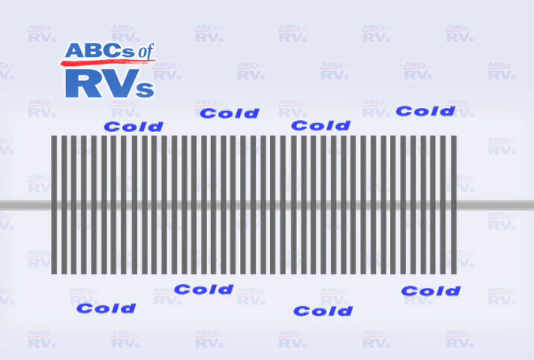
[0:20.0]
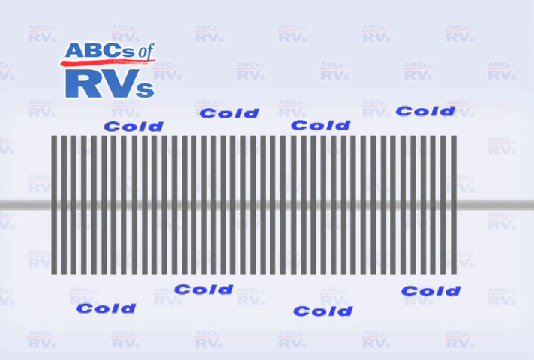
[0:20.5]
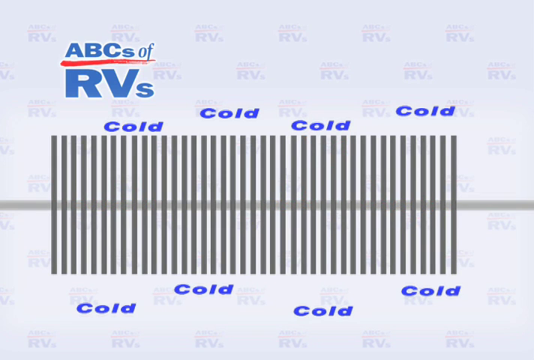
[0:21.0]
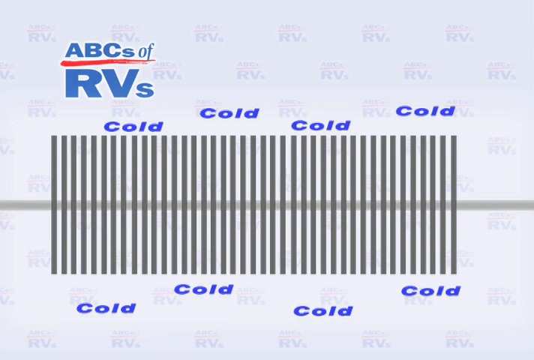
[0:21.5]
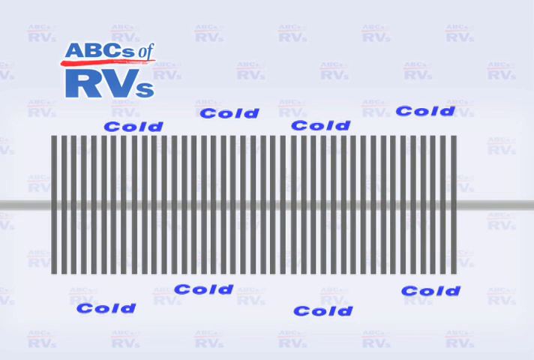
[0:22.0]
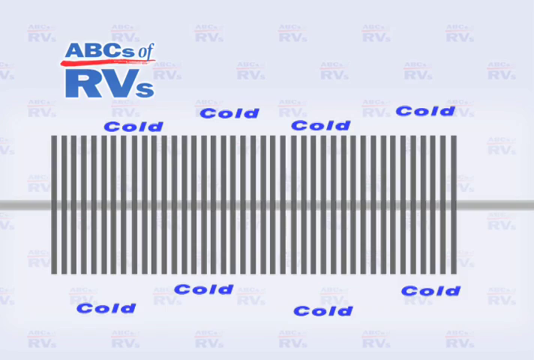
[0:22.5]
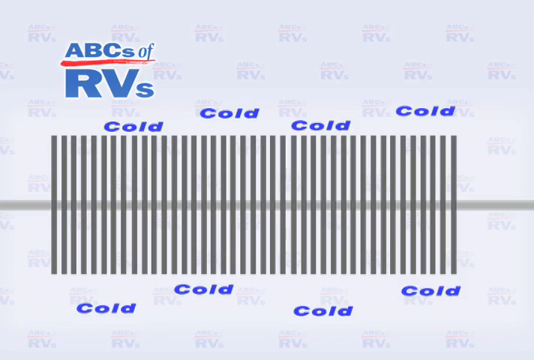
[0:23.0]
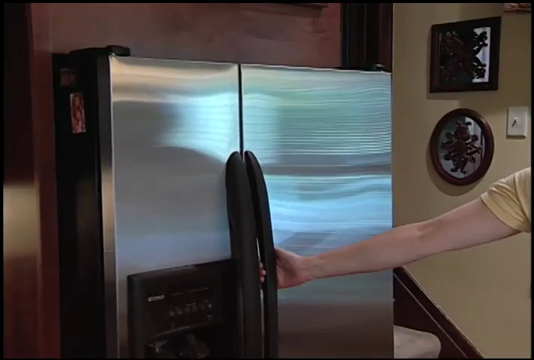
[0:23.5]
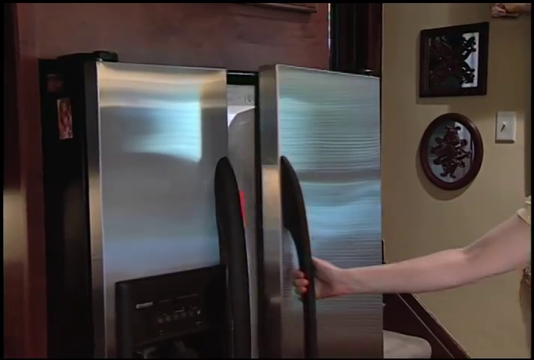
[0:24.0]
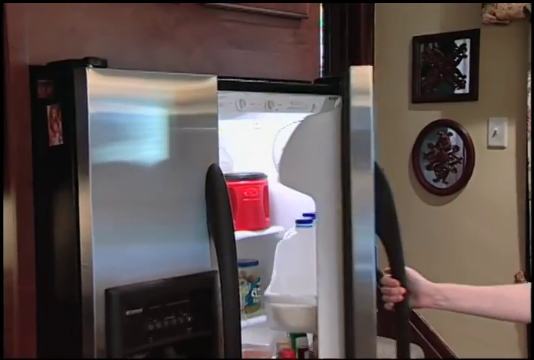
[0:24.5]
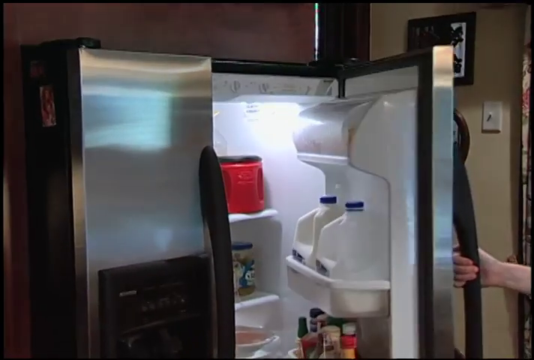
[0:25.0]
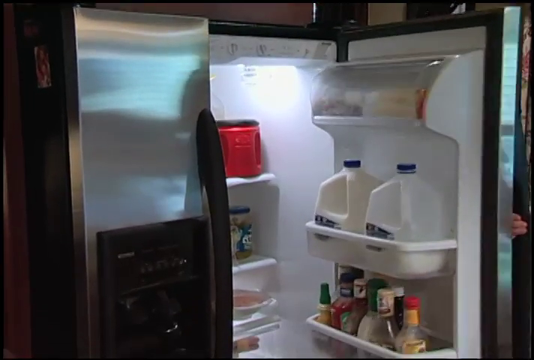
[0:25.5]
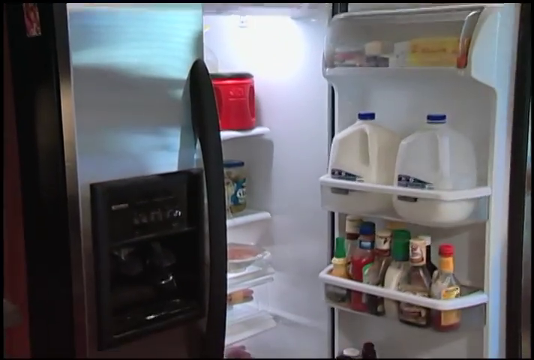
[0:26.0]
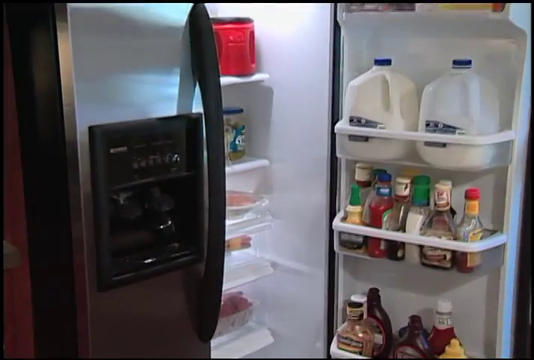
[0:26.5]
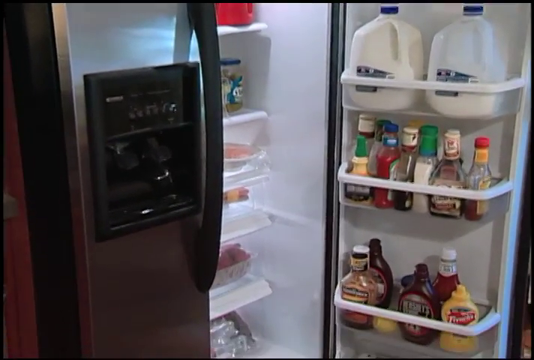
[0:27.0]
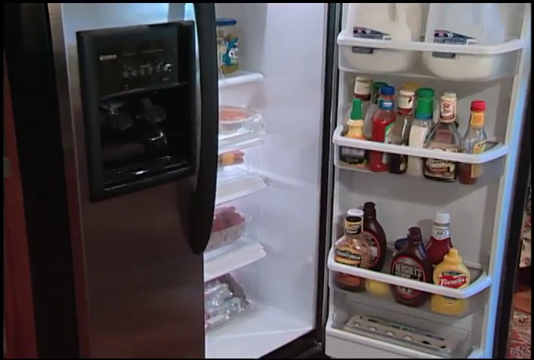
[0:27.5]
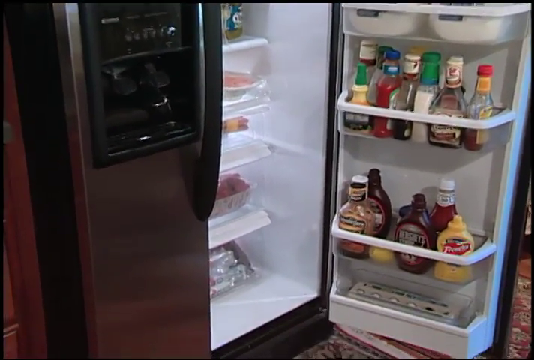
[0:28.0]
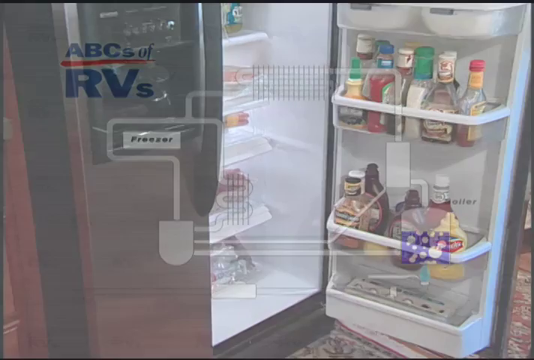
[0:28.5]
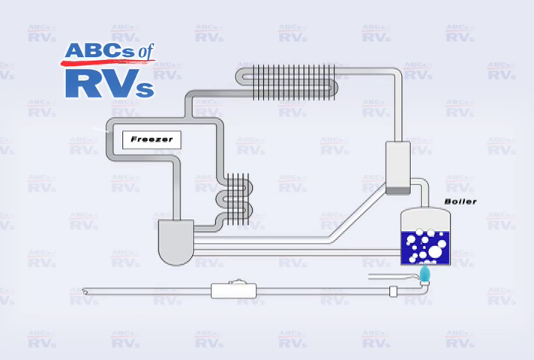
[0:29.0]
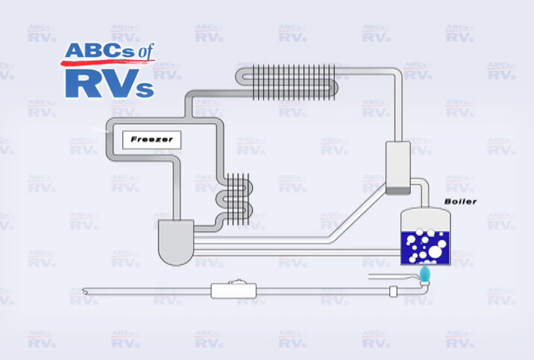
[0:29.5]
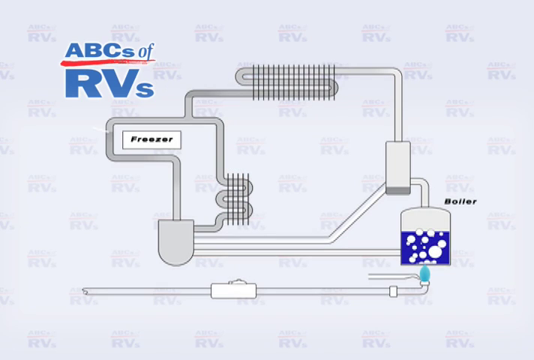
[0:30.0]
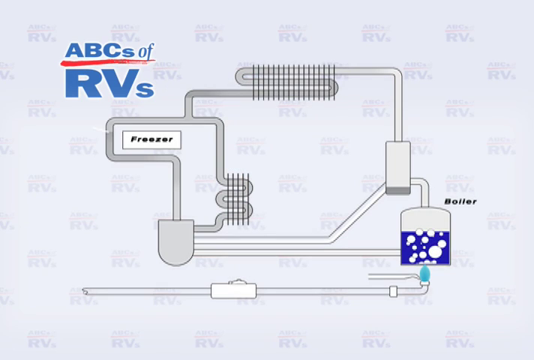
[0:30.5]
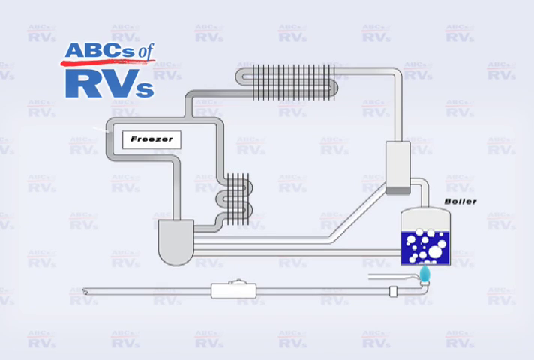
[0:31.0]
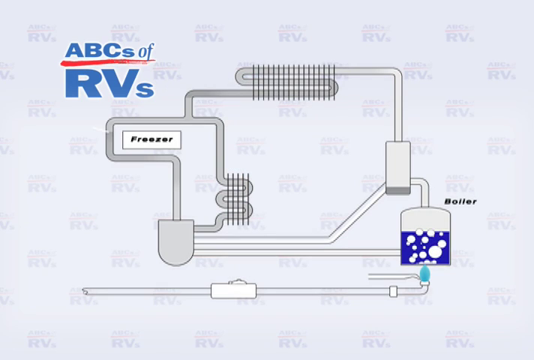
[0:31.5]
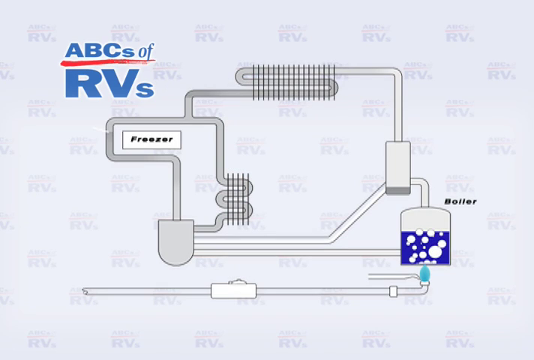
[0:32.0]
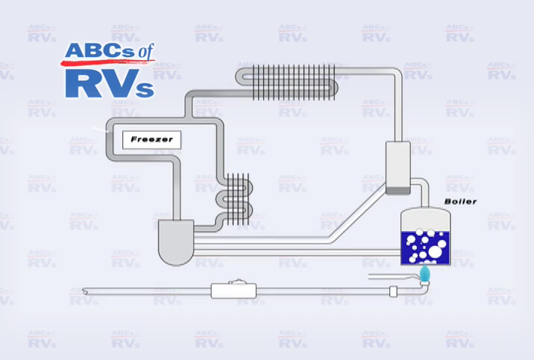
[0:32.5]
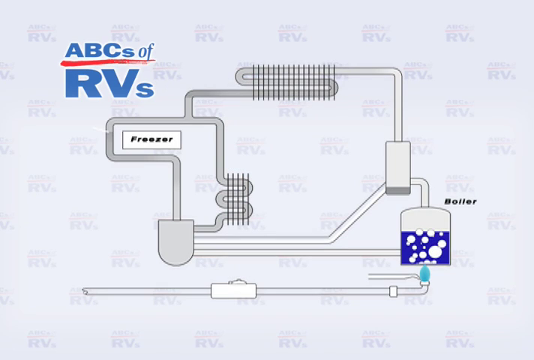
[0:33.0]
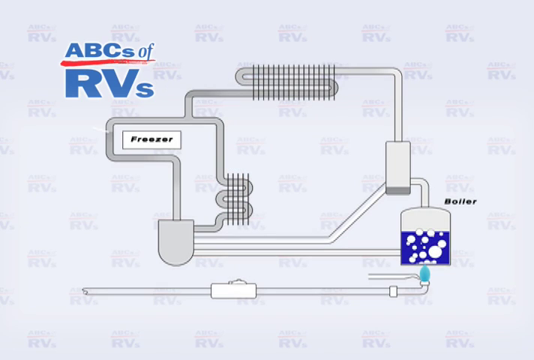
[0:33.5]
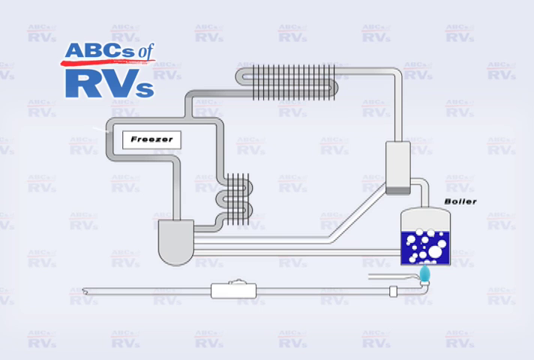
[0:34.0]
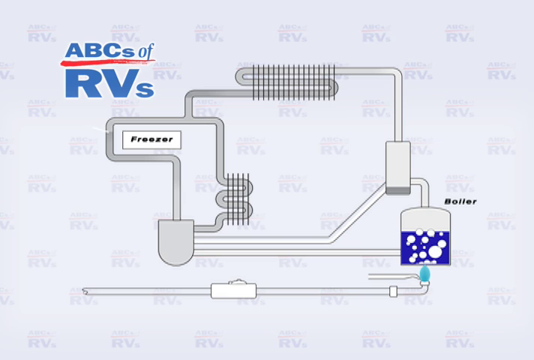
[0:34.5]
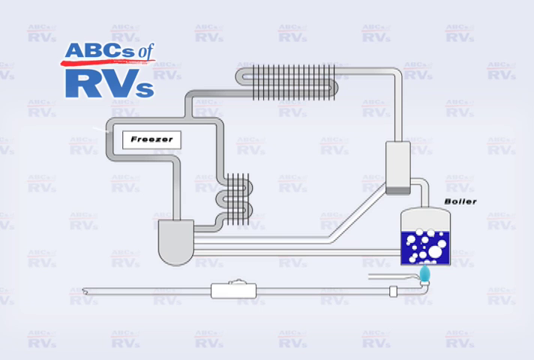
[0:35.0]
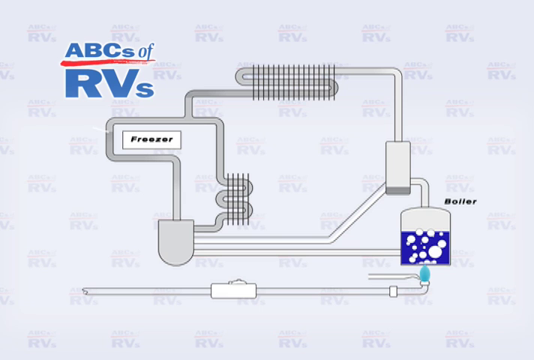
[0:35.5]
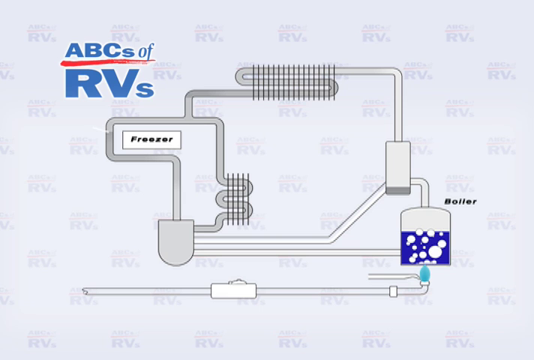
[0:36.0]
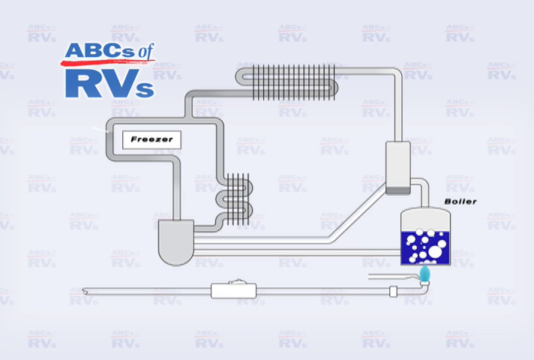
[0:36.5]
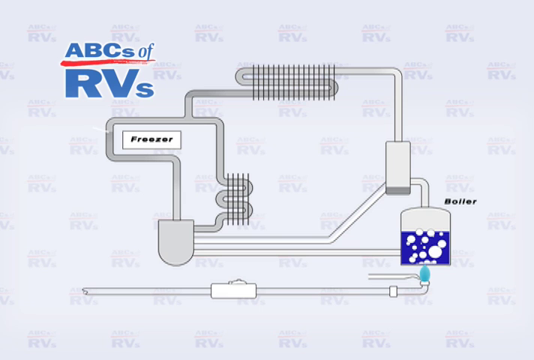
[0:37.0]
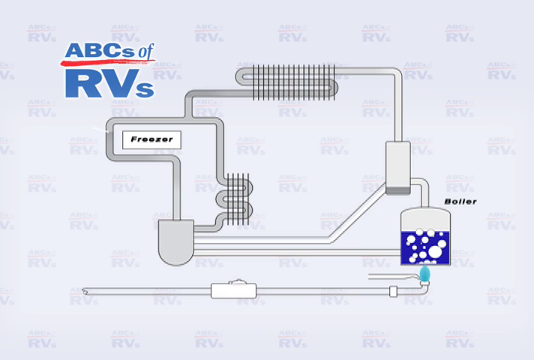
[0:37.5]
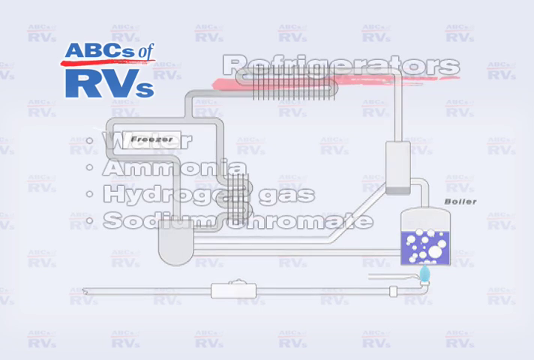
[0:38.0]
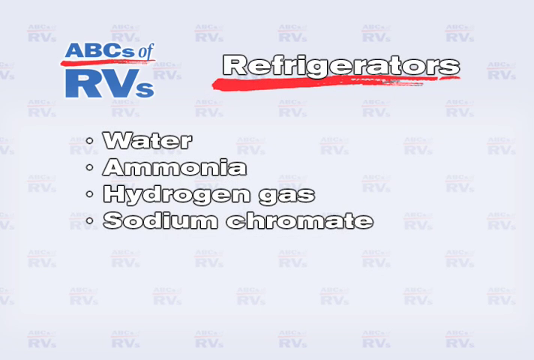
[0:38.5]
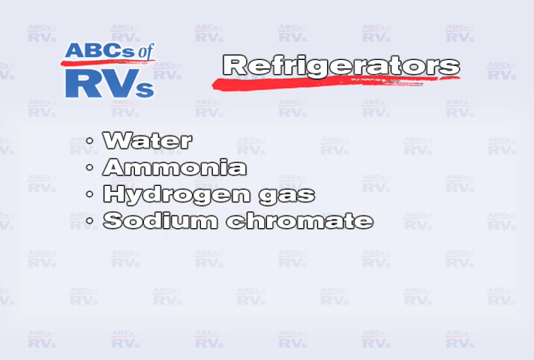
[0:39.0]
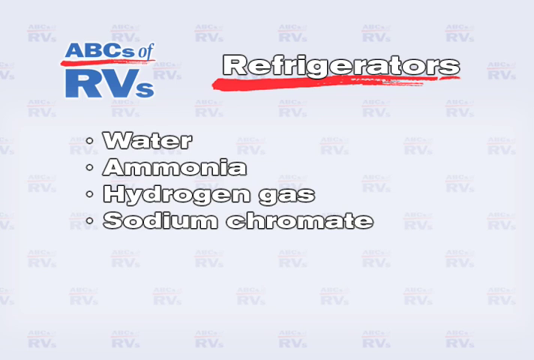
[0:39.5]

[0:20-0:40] The blue, cold RVs of the ABCs of RVs are shown, while the red ones are not. A person opens a refrigerator that is full of food. The video shows how the RVs are indicated on the refrigerator and which places are cold, including where the blue RVs are on the freezer. Water, ammonia, hydrogen gas and sodium chromate are listed, and the video indicates where the cold pads on the refrigerator are found.